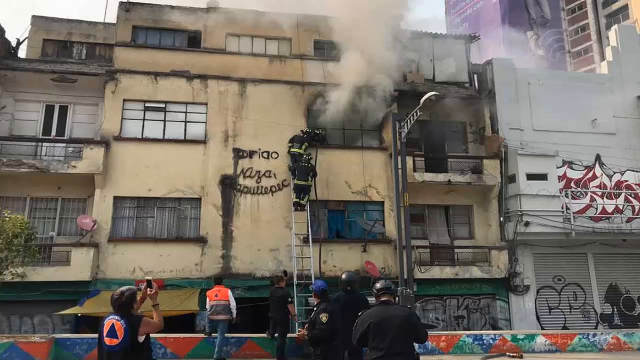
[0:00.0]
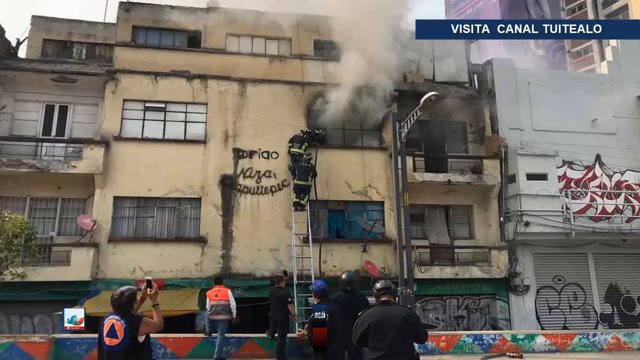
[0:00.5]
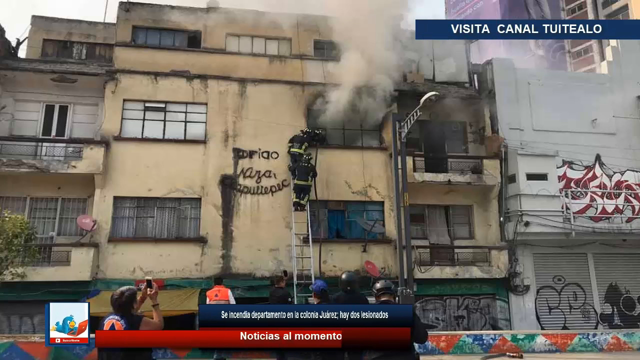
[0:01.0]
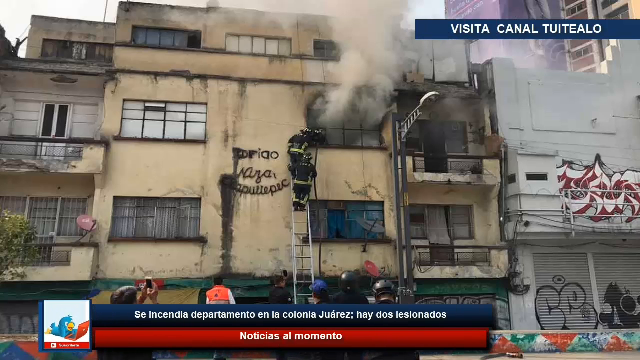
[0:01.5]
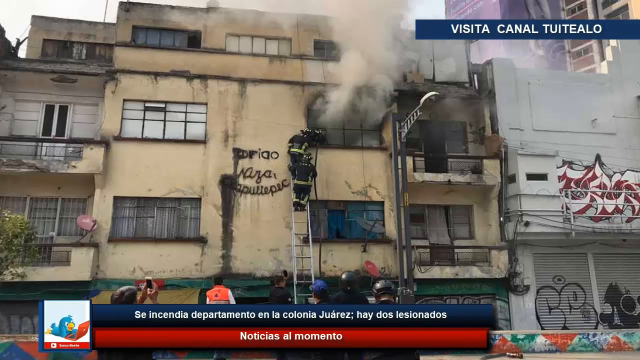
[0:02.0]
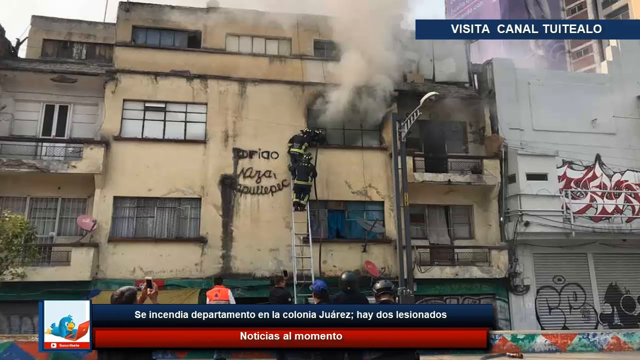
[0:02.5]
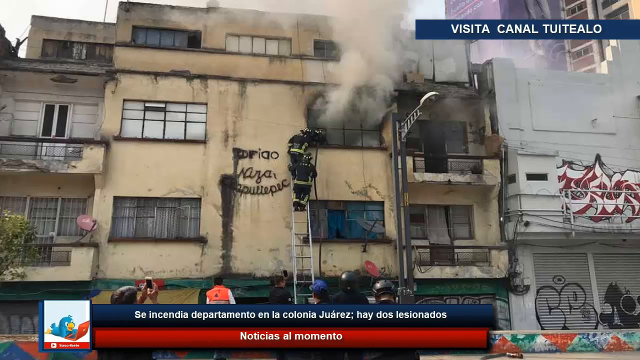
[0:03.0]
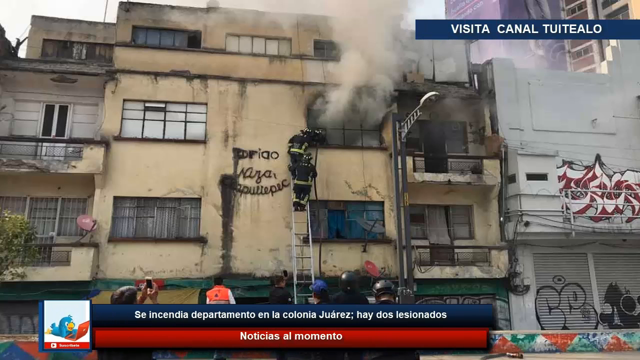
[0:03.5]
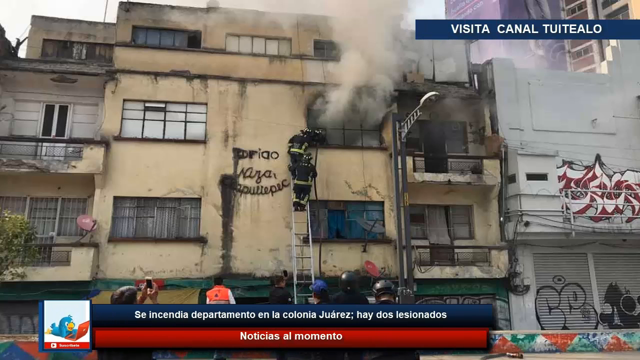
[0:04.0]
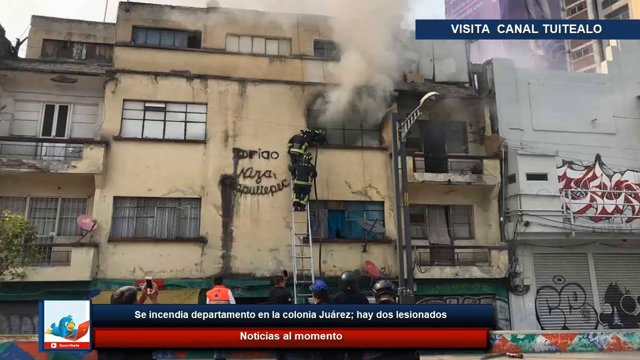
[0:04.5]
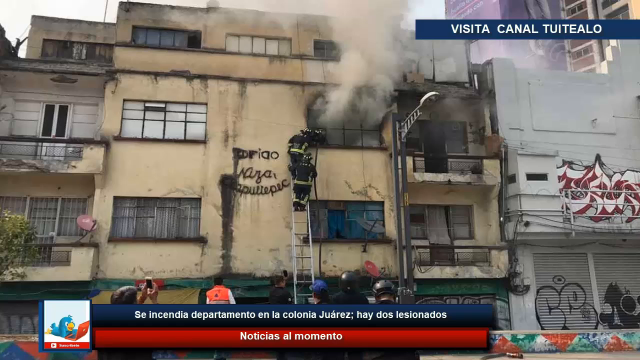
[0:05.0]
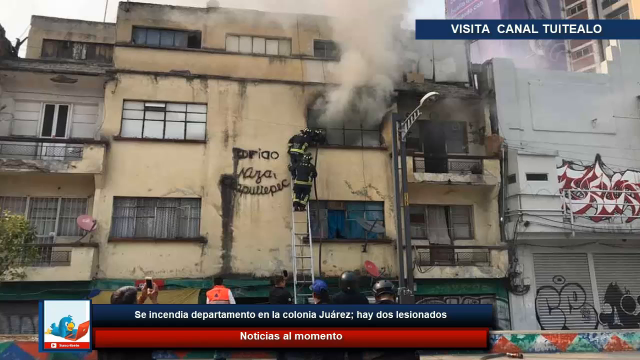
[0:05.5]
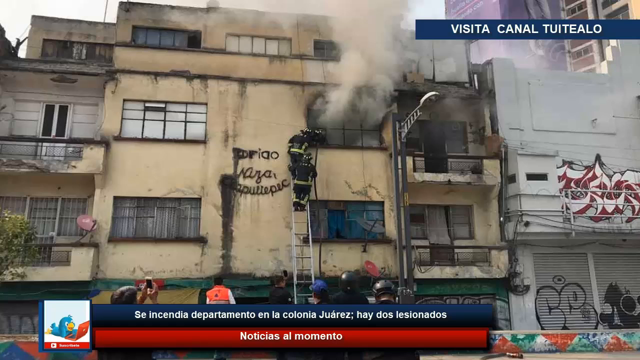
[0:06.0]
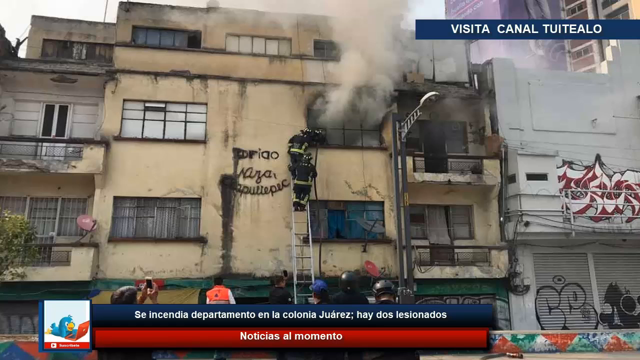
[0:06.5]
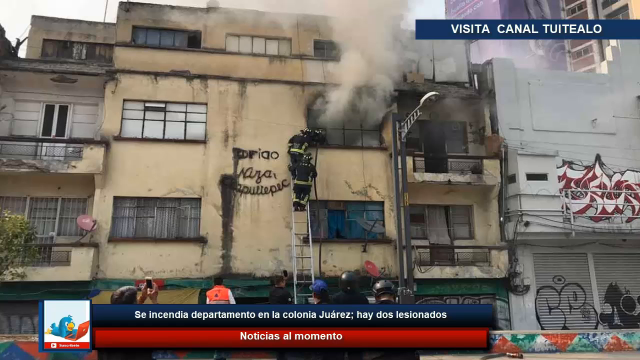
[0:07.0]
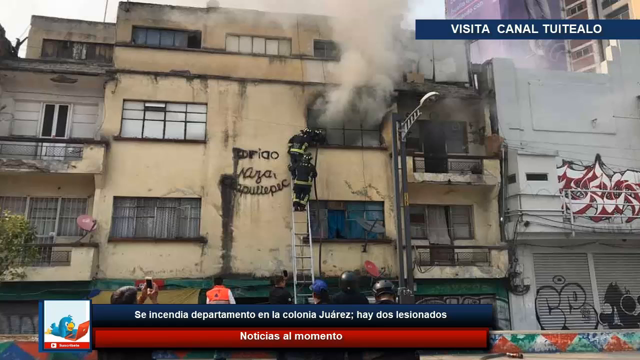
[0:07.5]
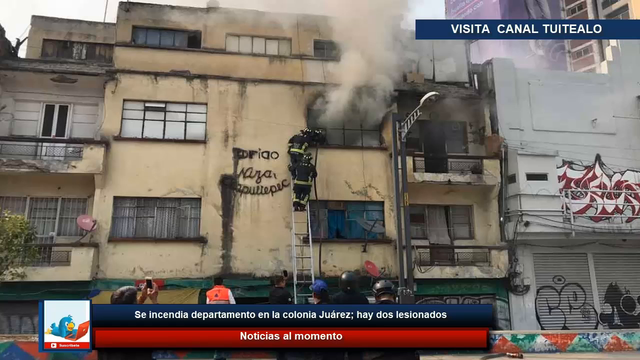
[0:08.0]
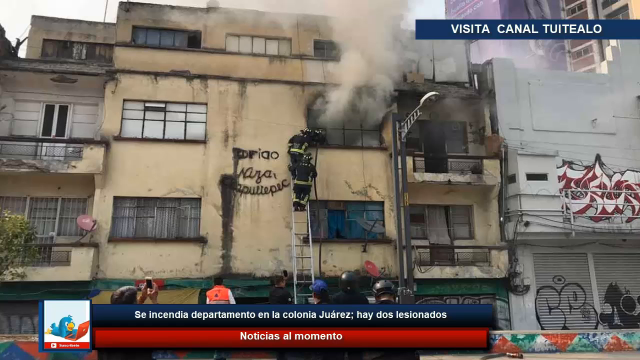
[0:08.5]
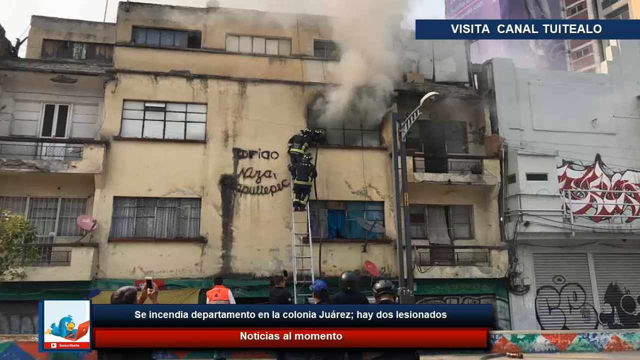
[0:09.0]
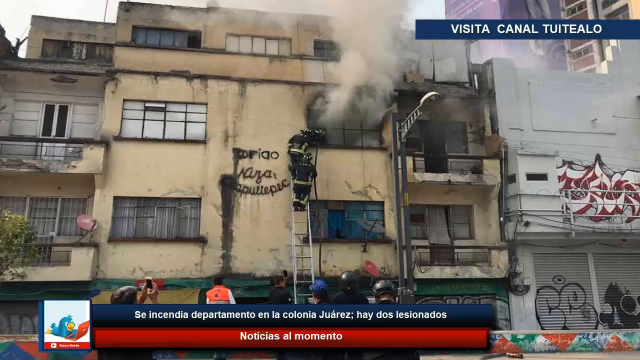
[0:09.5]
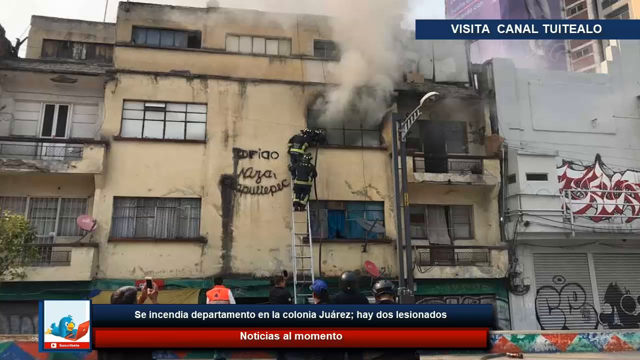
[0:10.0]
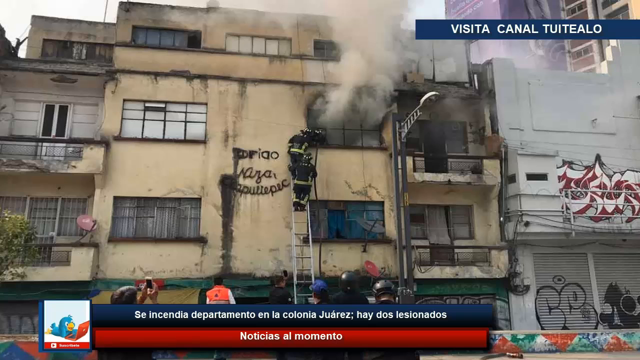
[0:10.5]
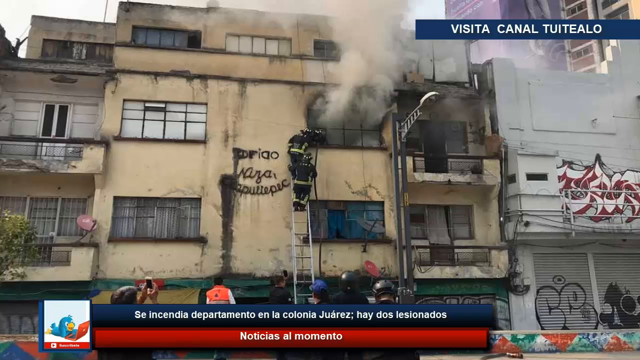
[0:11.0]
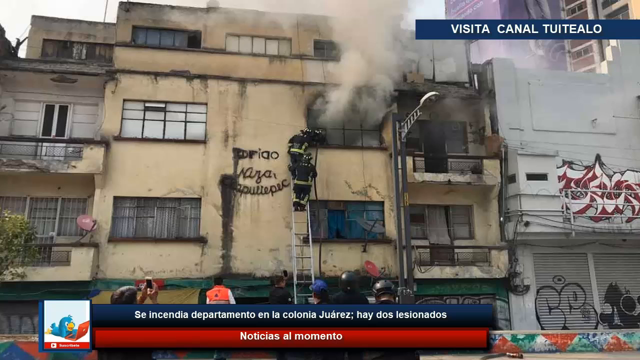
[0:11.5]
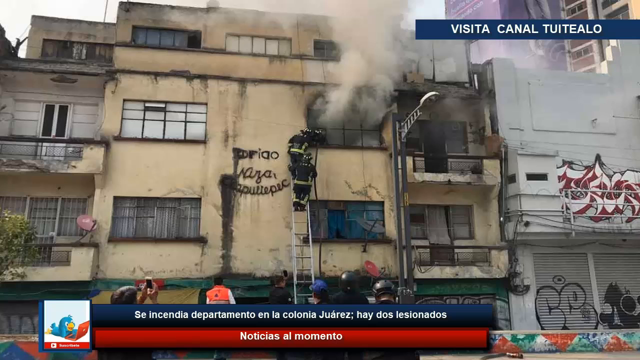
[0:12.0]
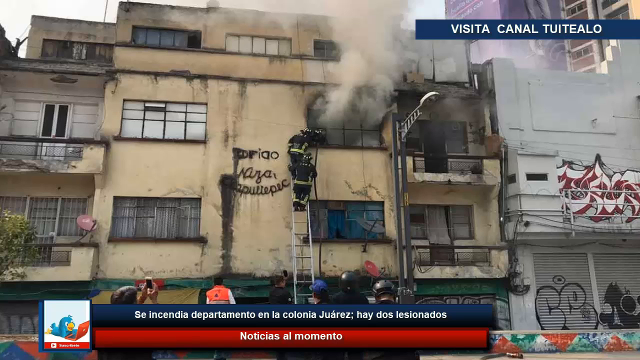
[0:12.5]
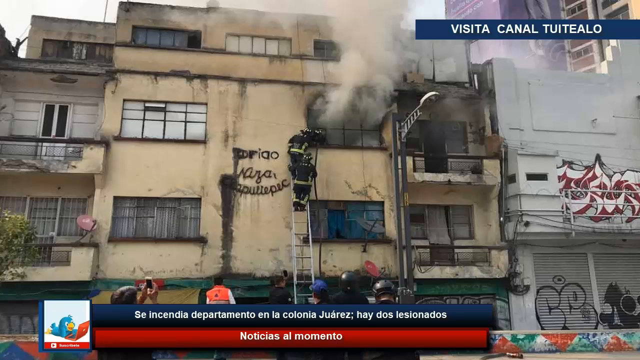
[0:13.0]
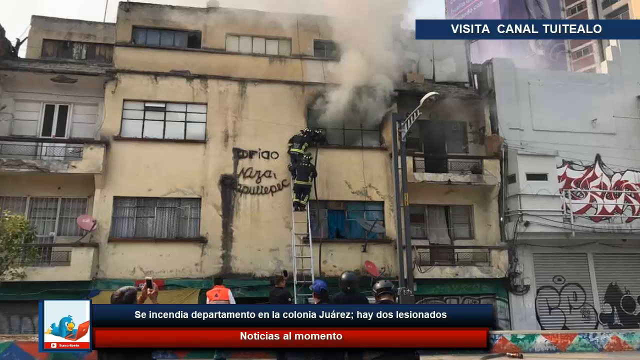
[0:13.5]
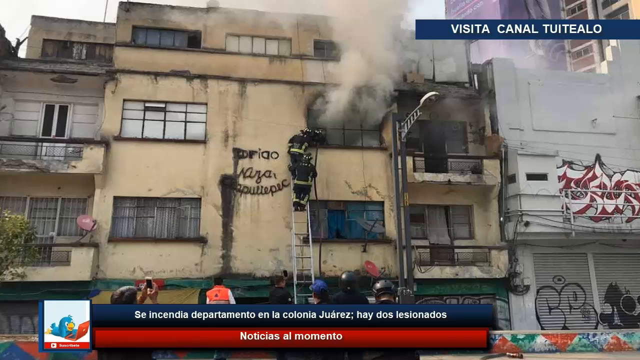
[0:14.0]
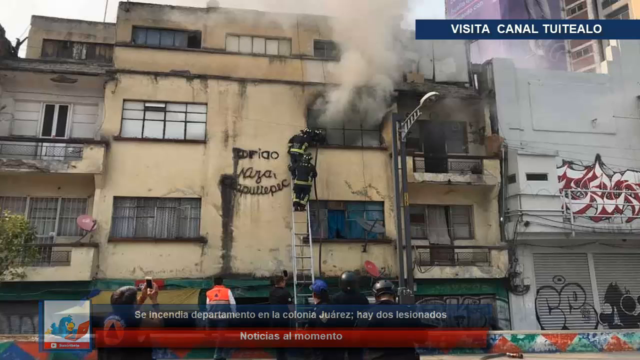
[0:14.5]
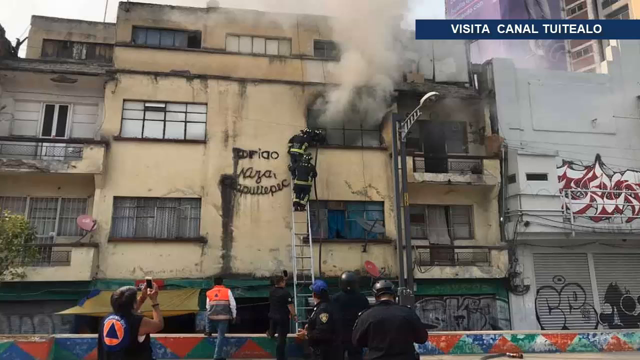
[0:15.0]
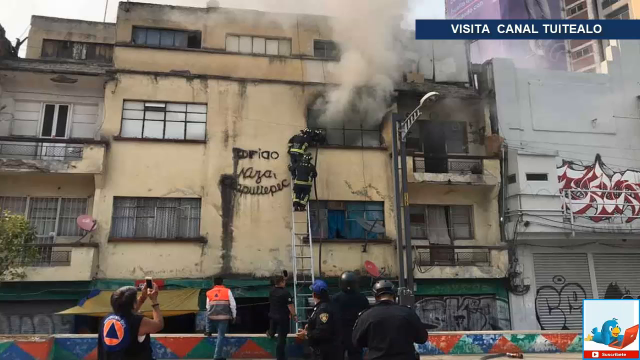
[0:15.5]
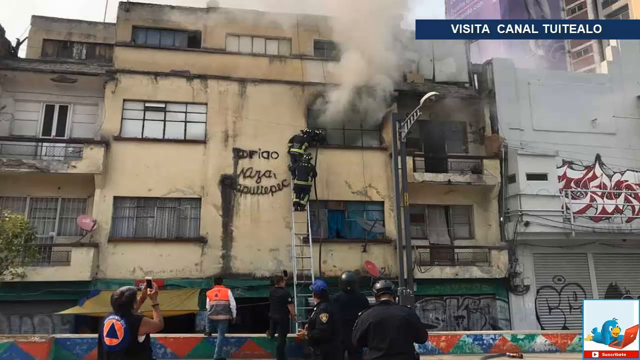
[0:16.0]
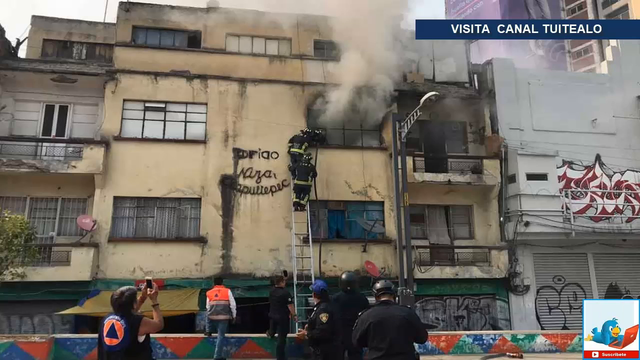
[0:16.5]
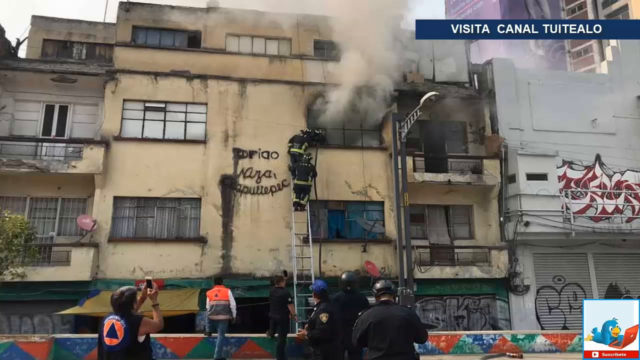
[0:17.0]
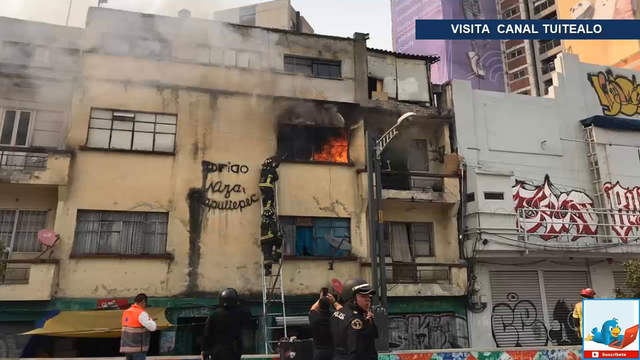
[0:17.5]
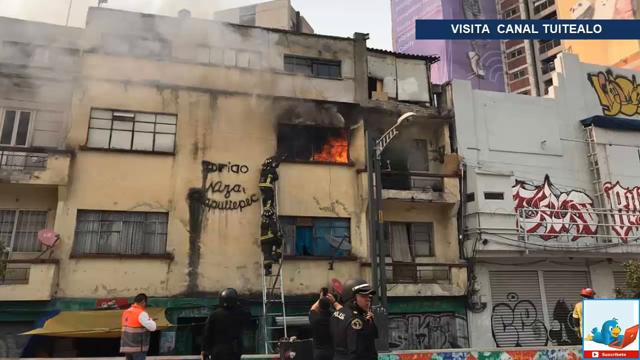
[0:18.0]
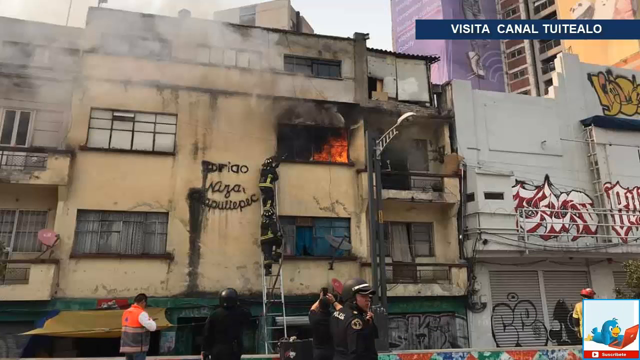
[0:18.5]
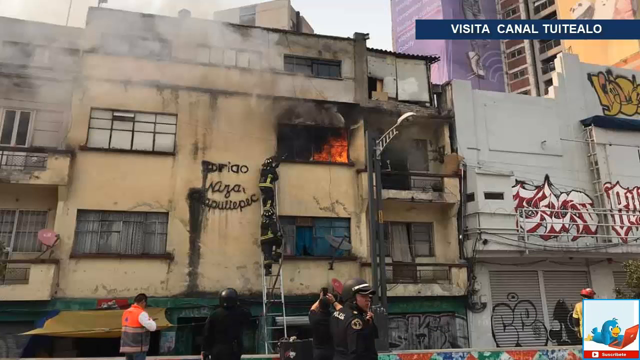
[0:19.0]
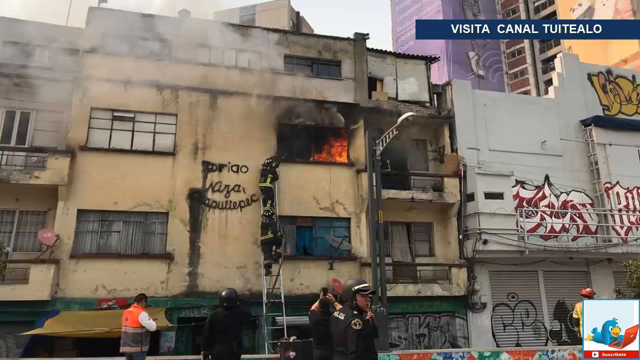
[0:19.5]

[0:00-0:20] A cement block building has smoke coming out of one of its windows, and firefighters are climbing a ladder up to that window. Three firefighters are visible: two are on ladders, and one has already made it in and is leaning out of the window. People stand on the ground below the building, among them a police officer in a black helmet. The broadcast is from a Spanish-language channel. A still shot of the fire follows. One person is taking a video with a camera, a man wears an orange, blue and white vest with a t-shirt under it, and another person wears a black jacket with an emblem on the left shoulder and a blue hat. There is writing on the building, and a streetlight is directly in front of it.